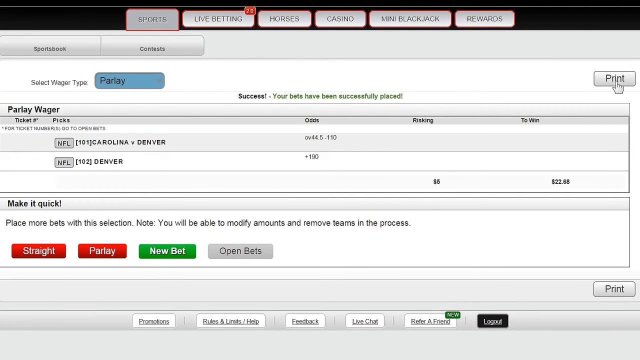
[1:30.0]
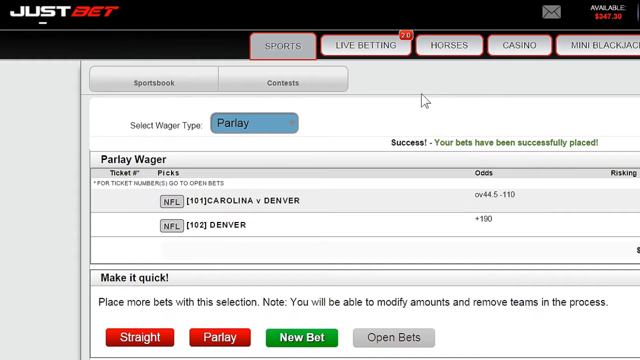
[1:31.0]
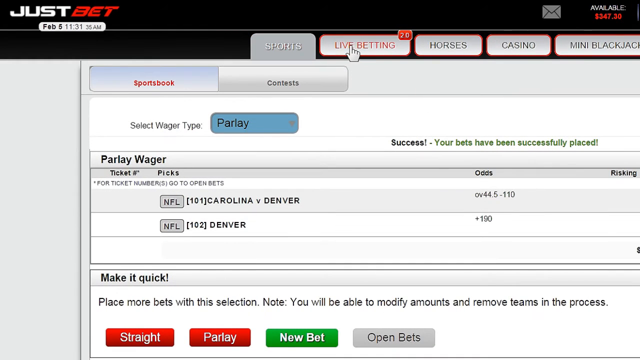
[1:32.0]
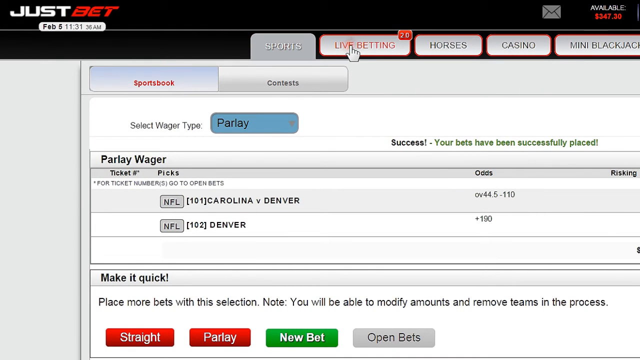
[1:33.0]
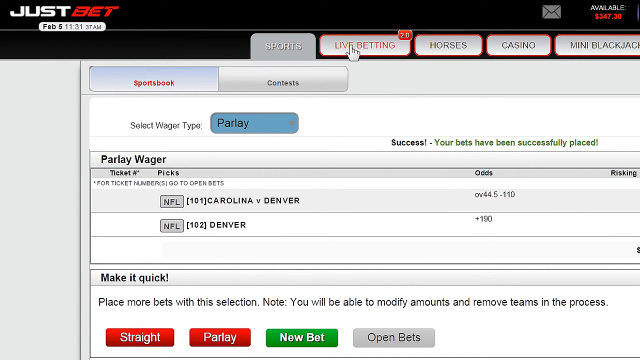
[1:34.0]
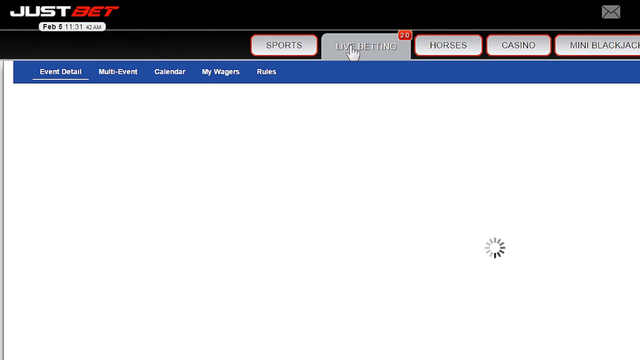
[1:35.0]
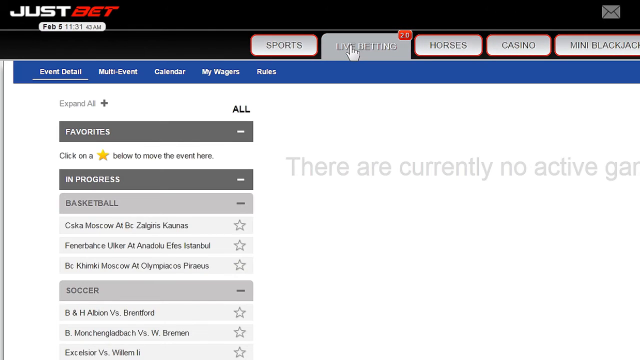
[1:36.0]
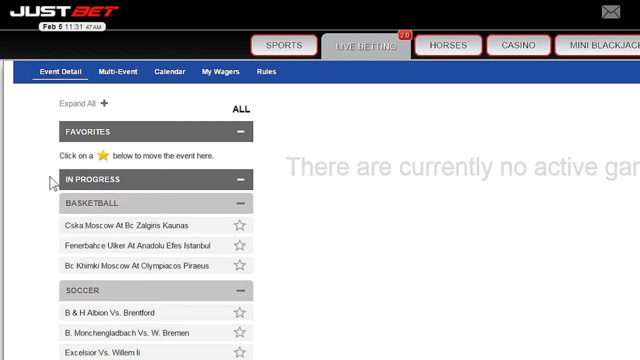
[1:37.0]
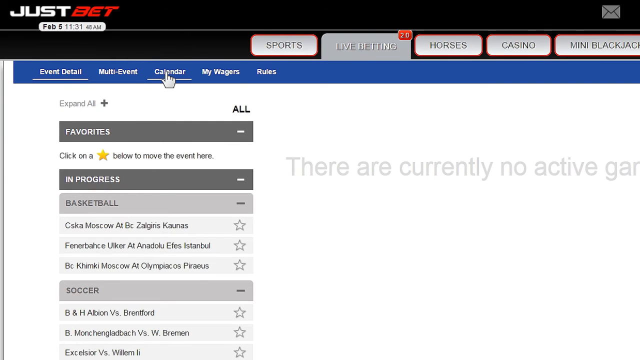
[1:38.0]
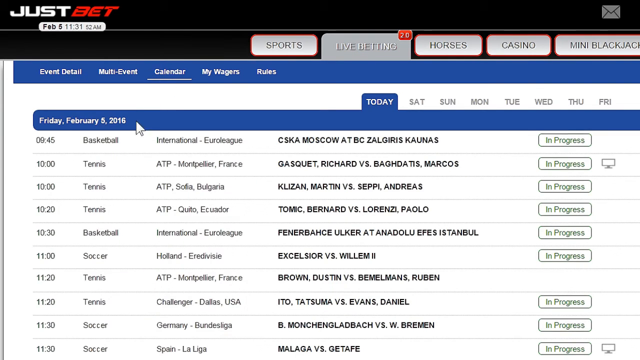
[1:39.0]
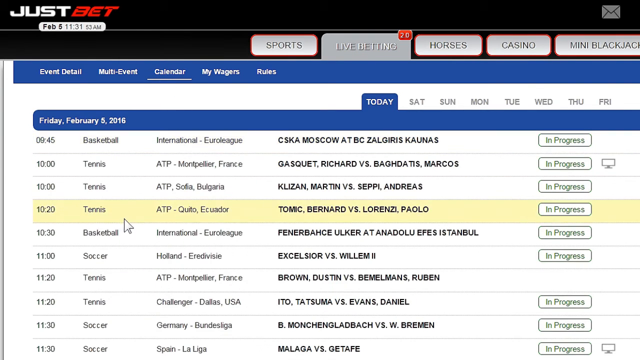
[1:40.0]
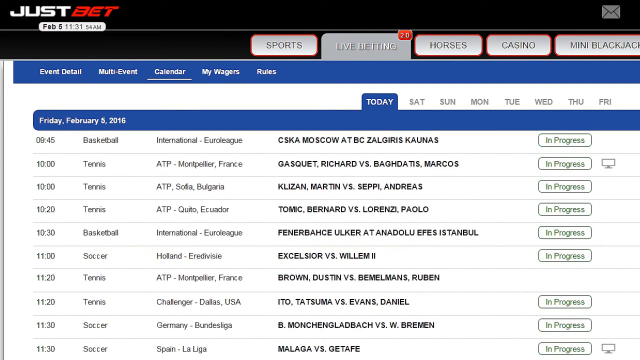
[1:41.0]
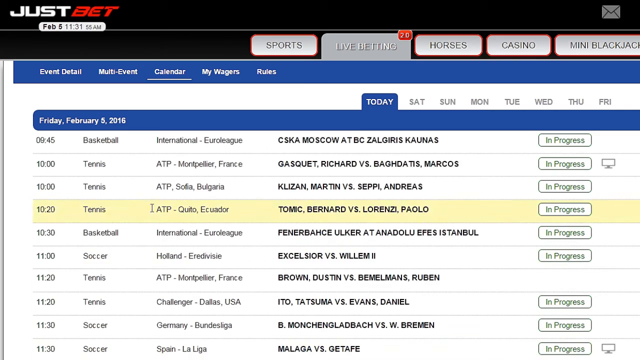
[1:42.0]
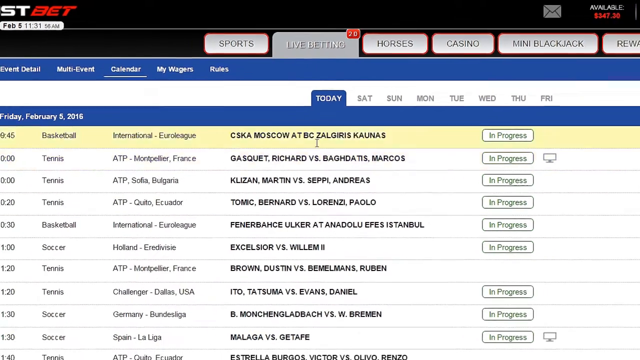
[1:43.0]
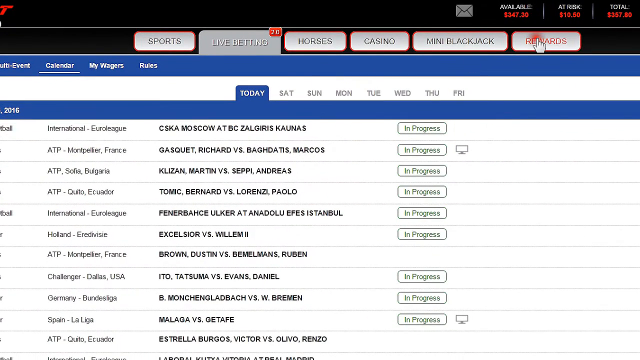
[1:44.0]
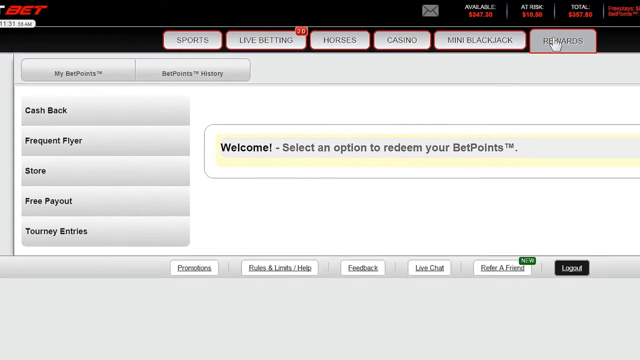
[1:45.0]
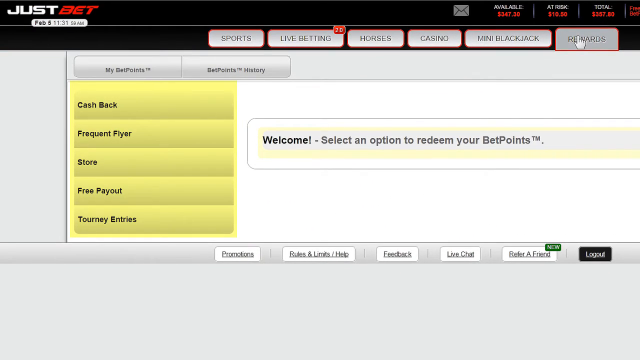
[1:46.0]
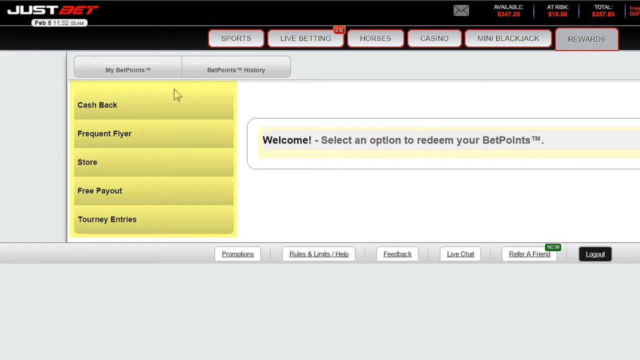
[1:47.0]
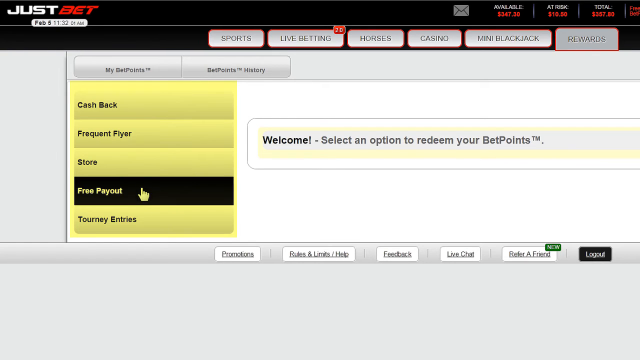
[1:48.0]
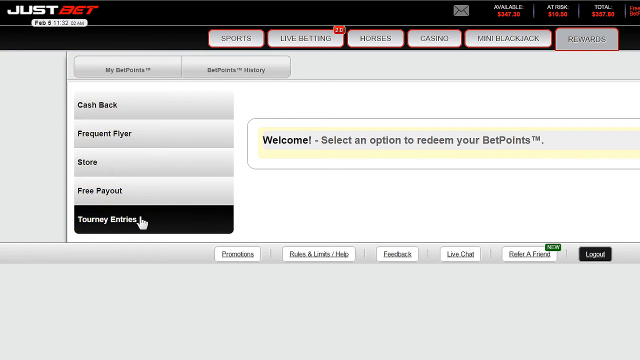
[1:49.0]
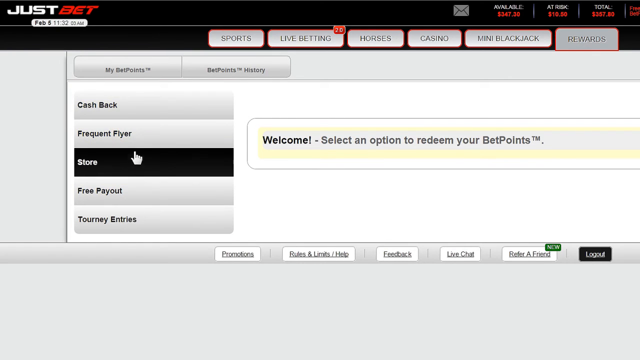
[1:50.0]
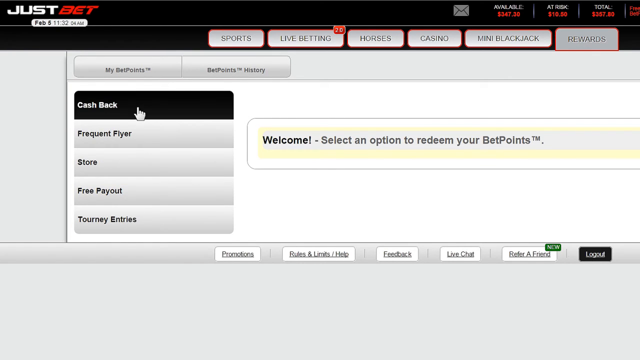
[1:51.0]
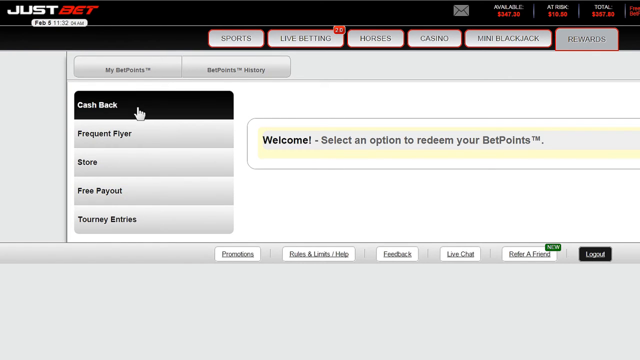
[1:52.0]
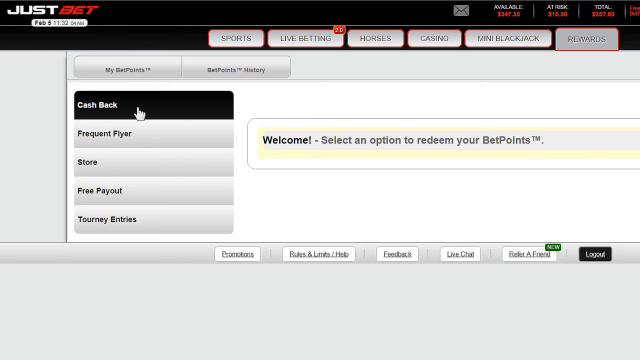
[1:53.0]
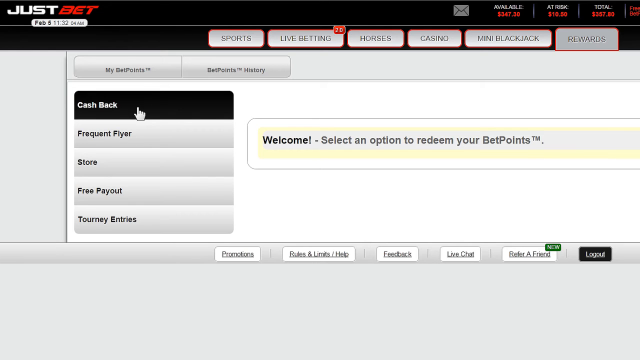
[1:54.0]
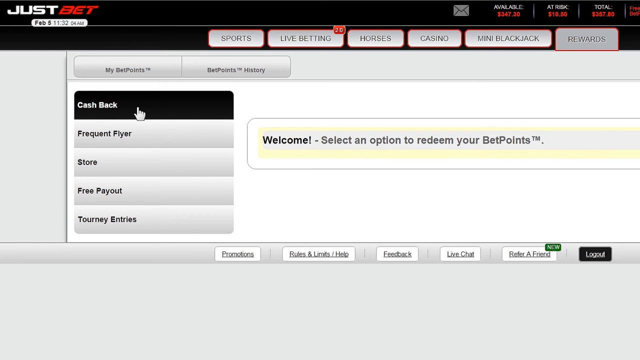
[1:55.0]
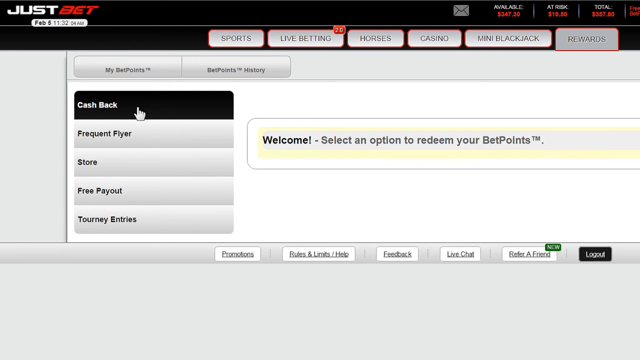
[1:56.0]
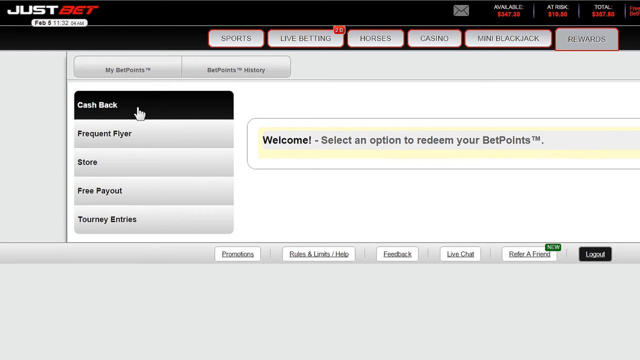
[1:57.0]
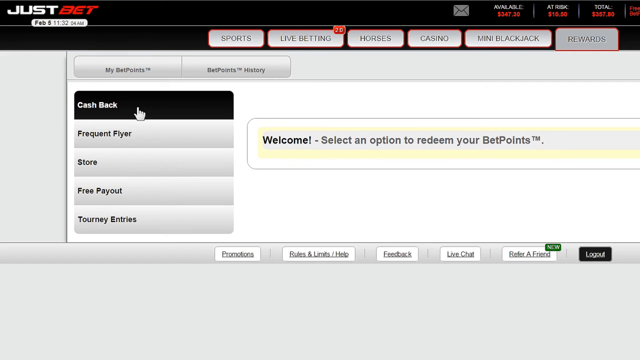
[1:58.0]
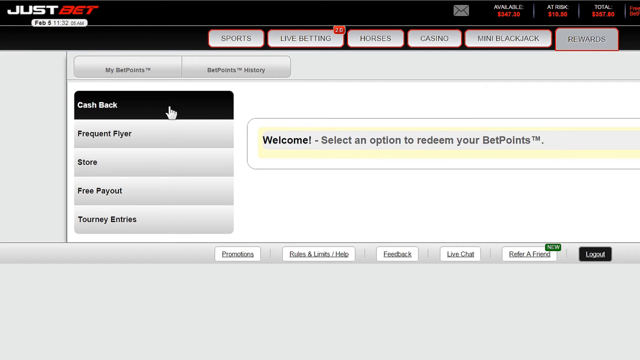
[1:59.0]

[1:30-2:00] On a sports betting website, someone clicks live betting, and a red marker with 20 in it is visible. They click calendar, scroll down and back up, and then click rewards, which shows "welcome, select an option to redeem your bet rewards." They scroll up and back, then click cash back, which is highlighted in black, and then click casino. At the bottom there is "refer a friend" with a green bar that says "new." The cursor stops on the word "print," in black on a white background near the top of the website, apparently to print the sports page. "Parlay" is highlighted in blue, and the midsection shows "straight" and "parlay" in red bars, "new bet" in green and "open bets" in gray.